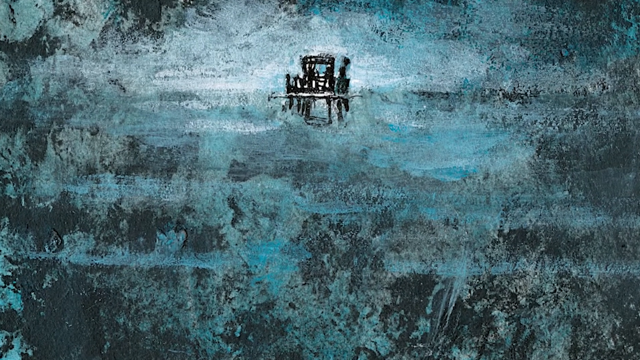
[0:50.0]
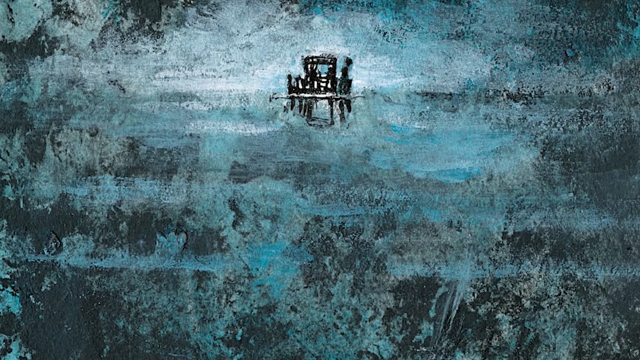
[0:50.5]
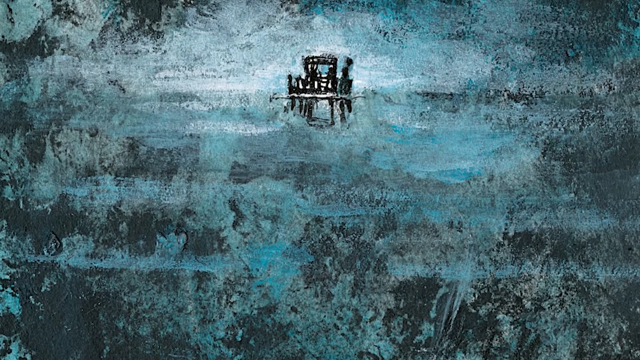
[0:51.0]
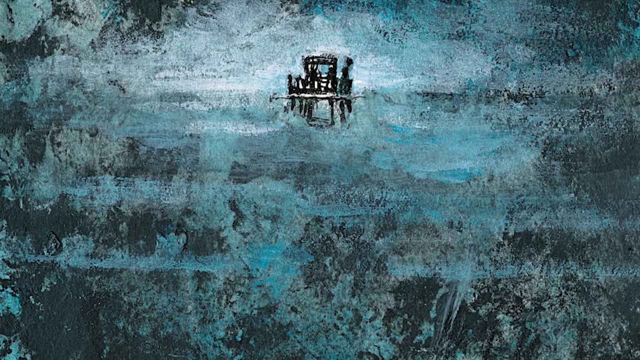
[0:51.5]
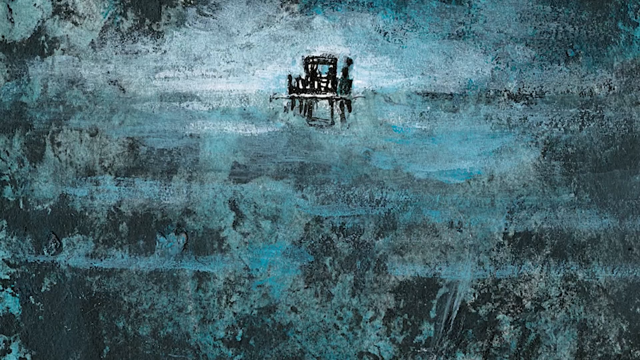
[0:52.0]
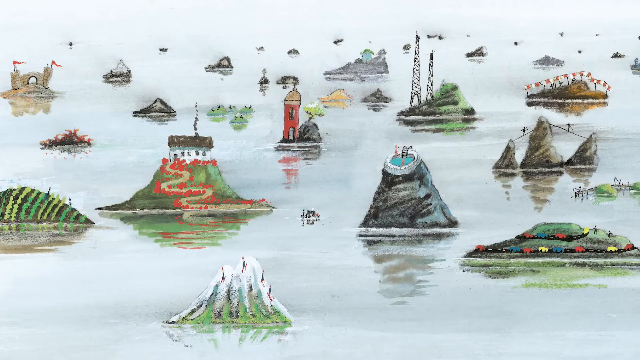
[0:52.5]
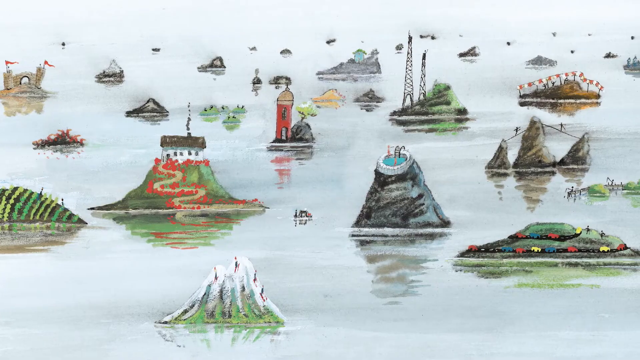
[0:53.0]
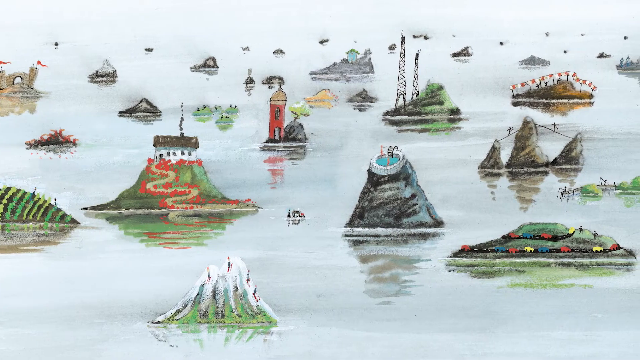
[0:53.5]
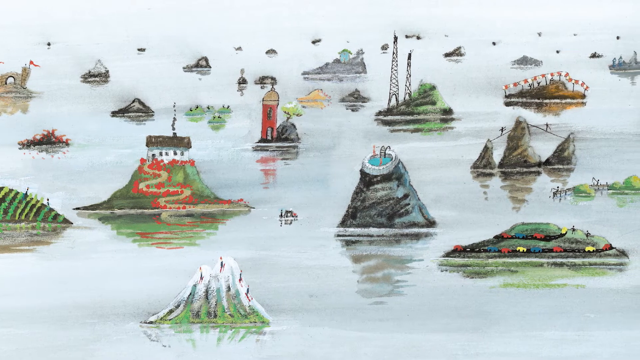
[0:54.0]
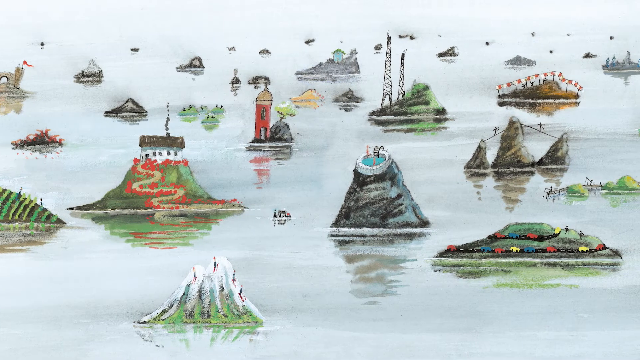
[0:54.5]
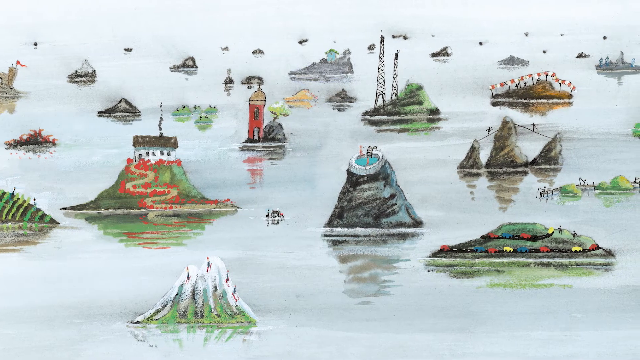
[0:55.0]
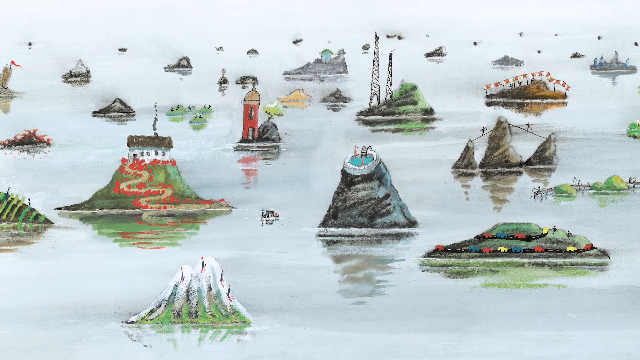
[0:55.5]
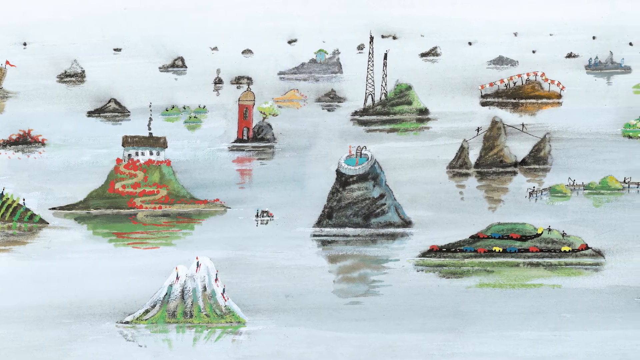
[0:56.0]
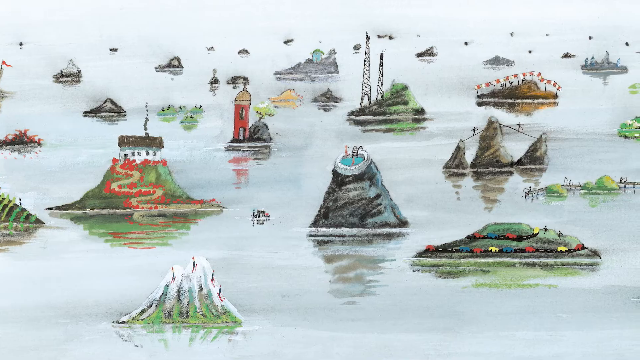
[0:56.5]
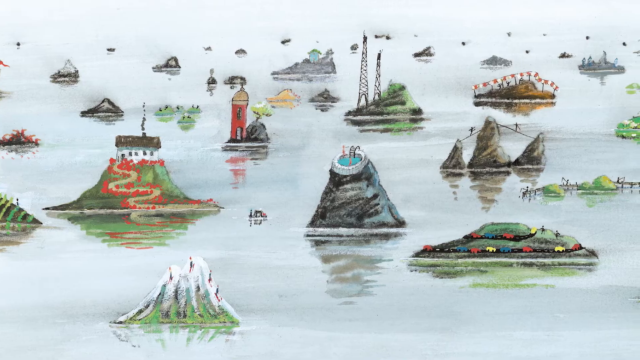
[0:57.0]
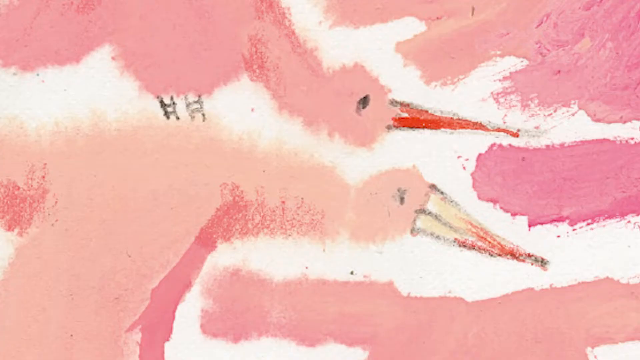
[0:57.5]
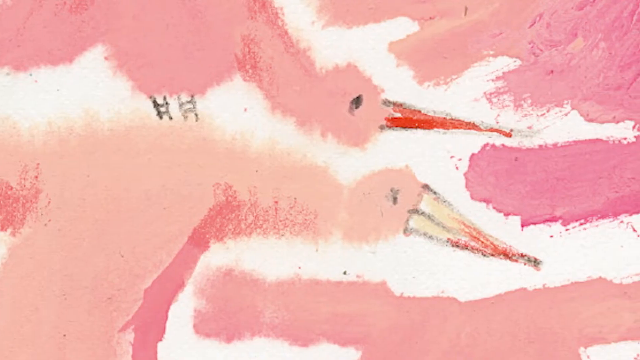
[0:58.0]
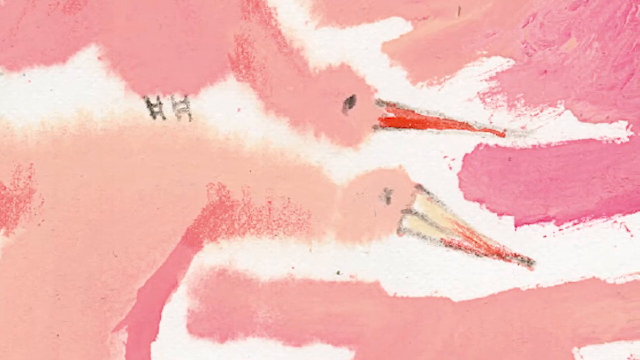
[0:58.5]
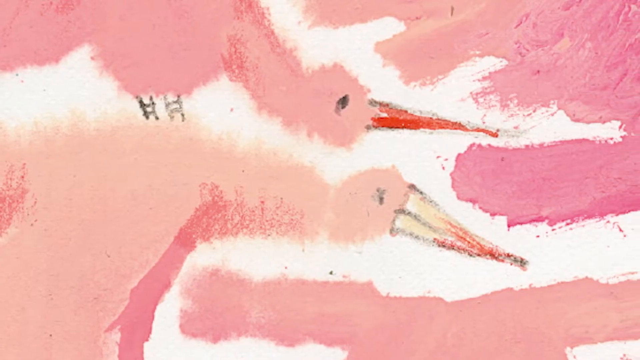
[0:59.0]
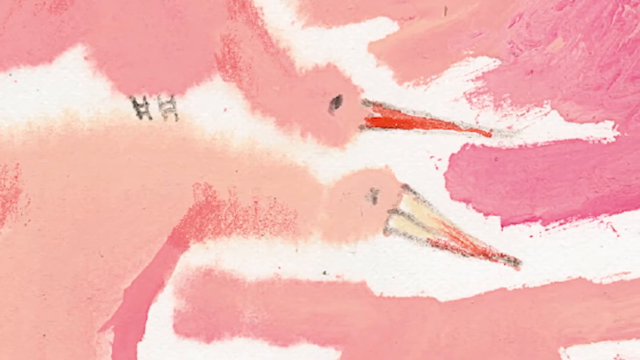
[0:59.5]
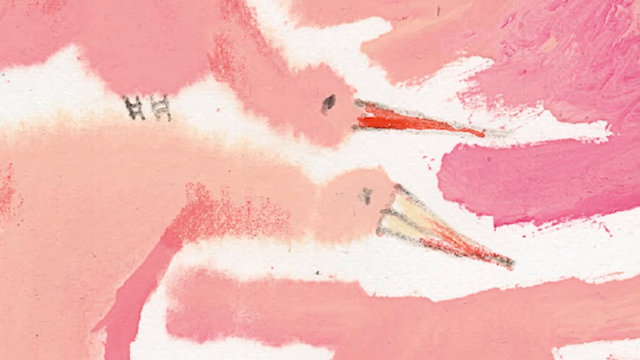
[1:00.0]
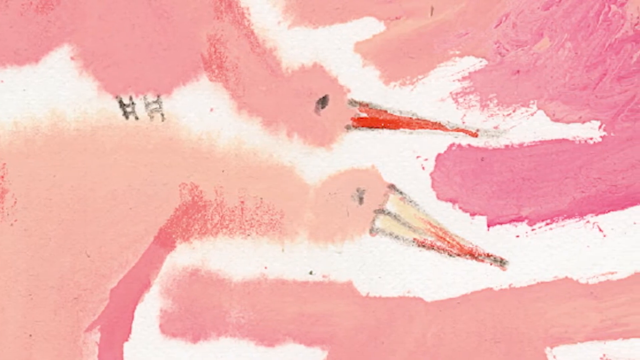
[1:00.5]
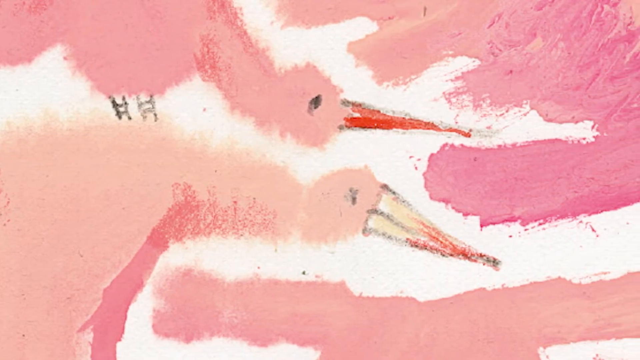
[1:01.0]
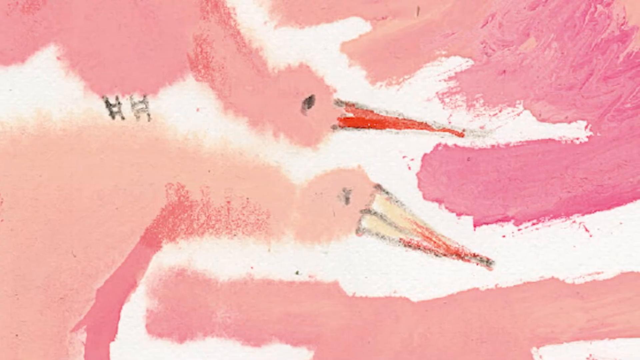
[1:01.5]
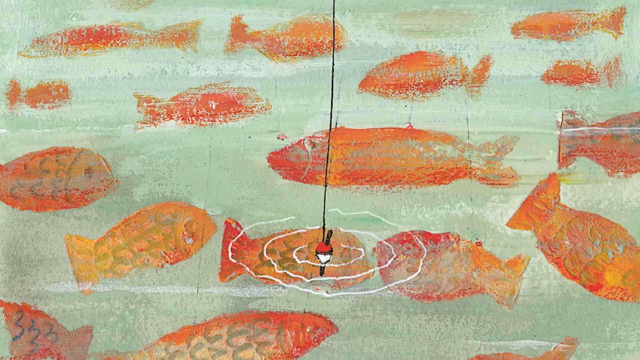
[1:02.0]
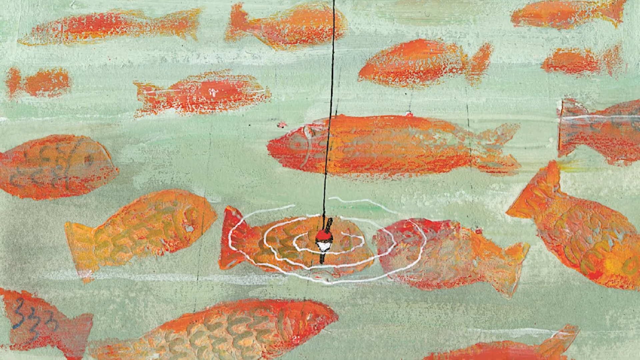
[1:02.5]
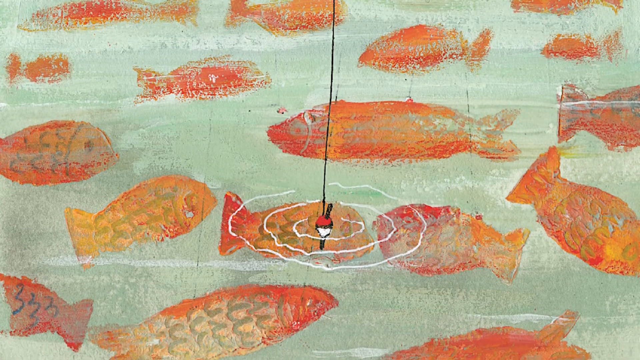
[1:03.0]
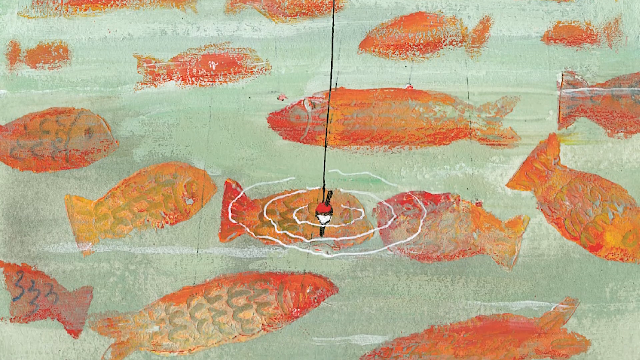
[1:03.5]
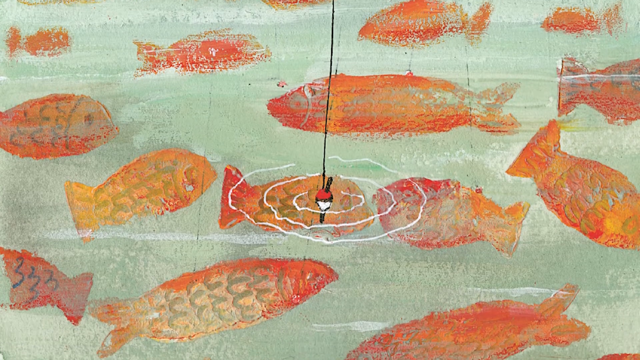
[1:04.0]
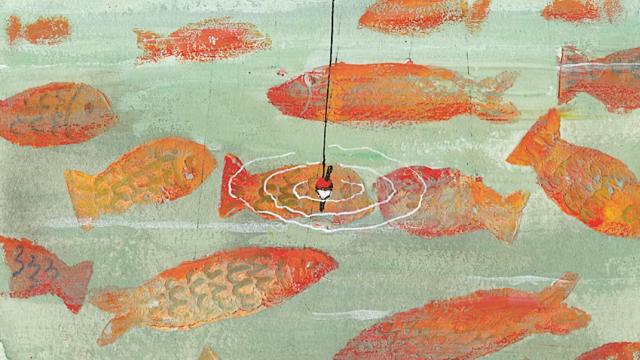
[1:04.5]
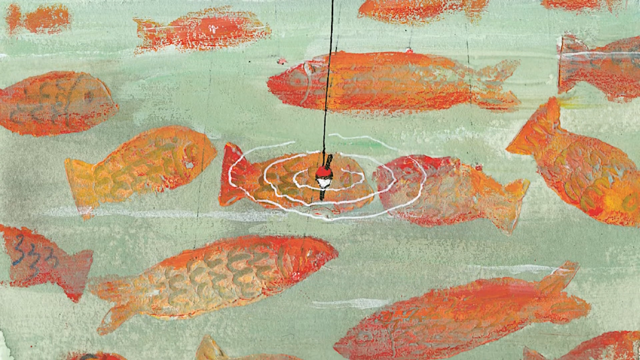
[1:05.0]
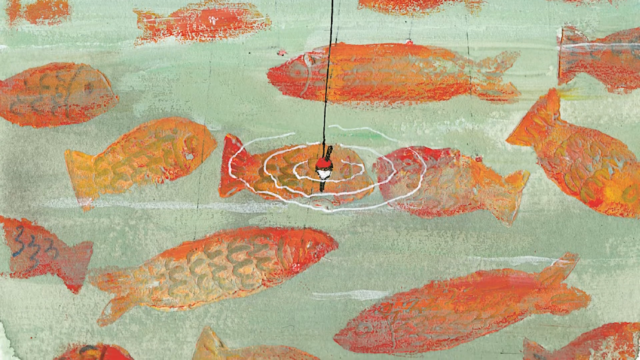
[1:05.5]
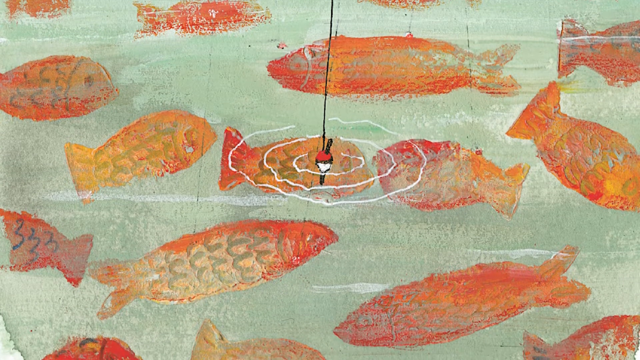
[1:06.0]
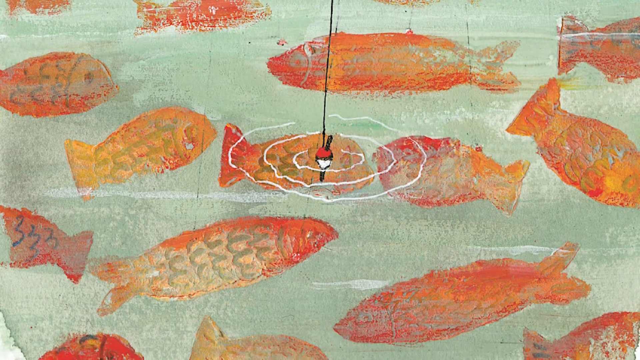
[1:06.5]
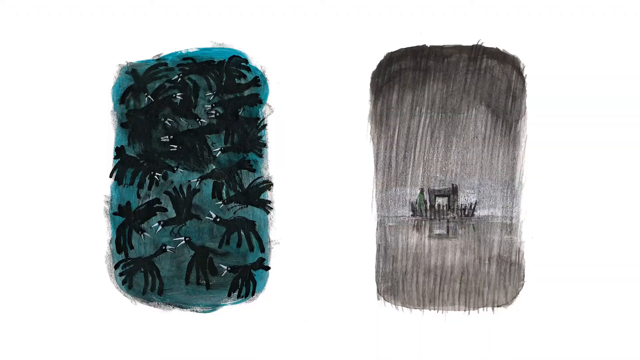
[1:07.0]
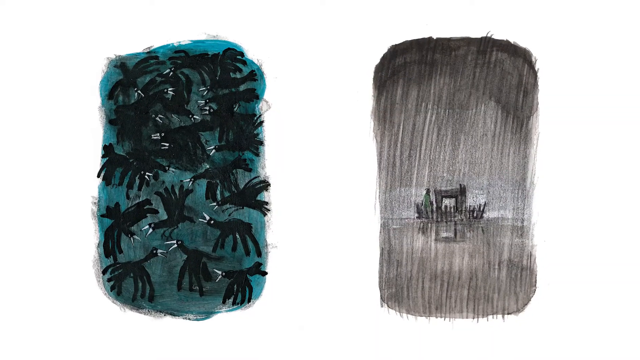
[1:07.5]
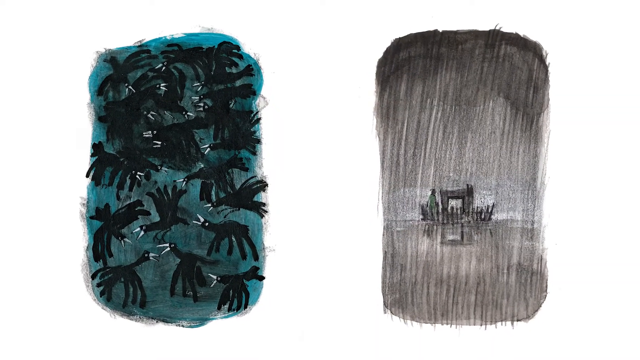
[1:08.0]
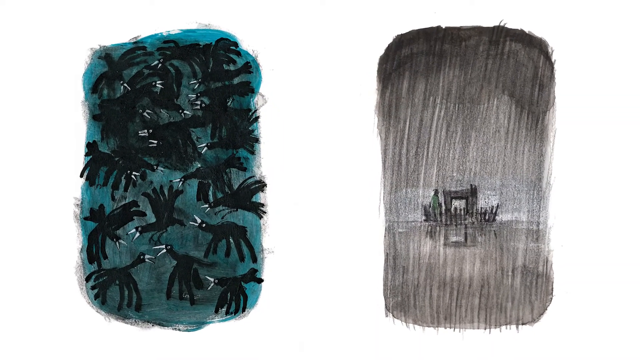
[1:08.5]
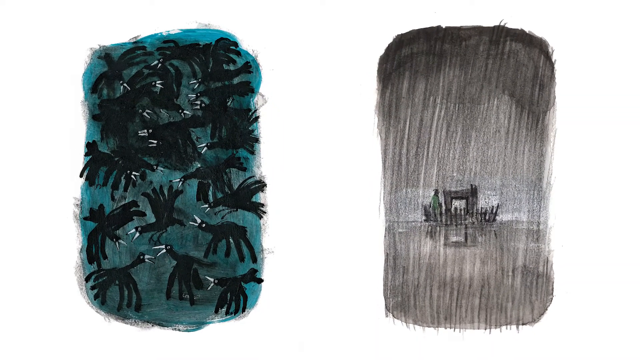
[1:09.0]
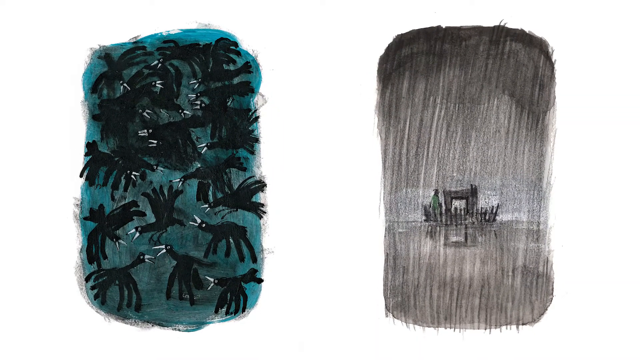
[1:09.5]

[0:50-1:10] A very dark image in blue and black looks almost like static. The image changes to show many little islands close to each other, each with a different theme: one looks like snow peaks, another has many roads and cars, one has a pool on top, and on another some people are tightrope walking, all random, whimsical, tiny islands. The scene shifts to a close-up of what looks like many flamingos drawn in oil paints, with only their heads visible. Another close-up shows details of a painting with a person and a fishing pole, focusing on the fish in the water and the bobber in the water. Then an image shows crows on one side and the houseboat in a rainstorm on the other side.